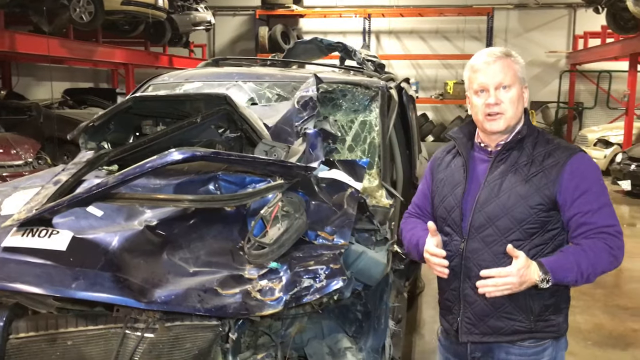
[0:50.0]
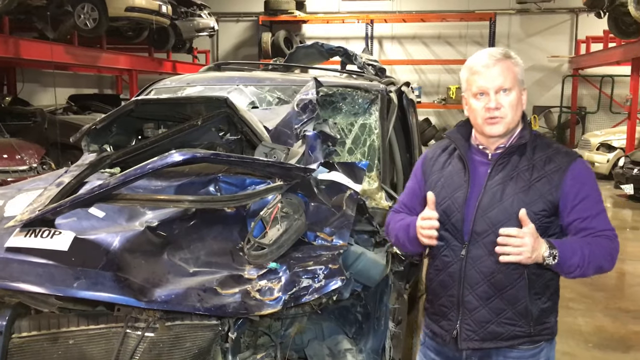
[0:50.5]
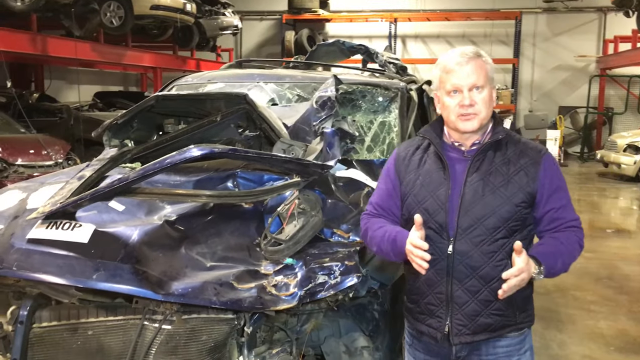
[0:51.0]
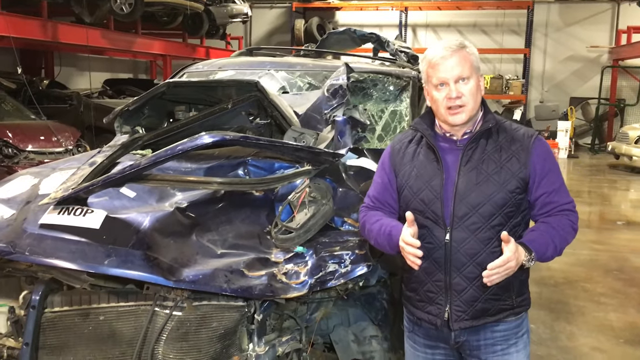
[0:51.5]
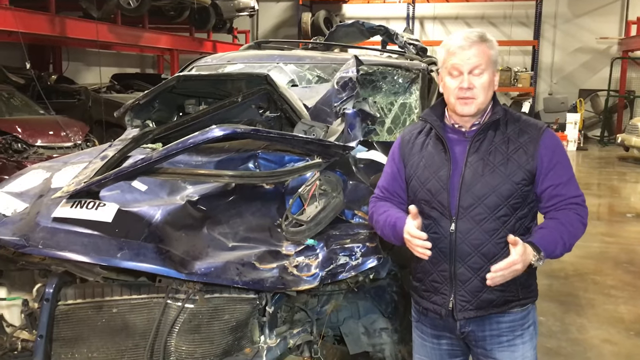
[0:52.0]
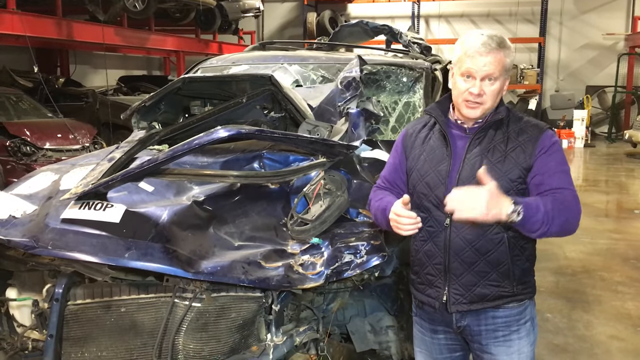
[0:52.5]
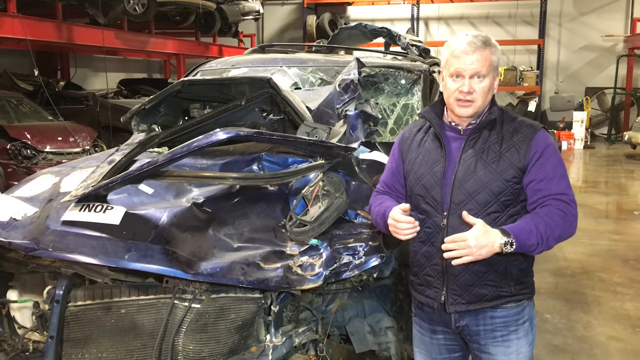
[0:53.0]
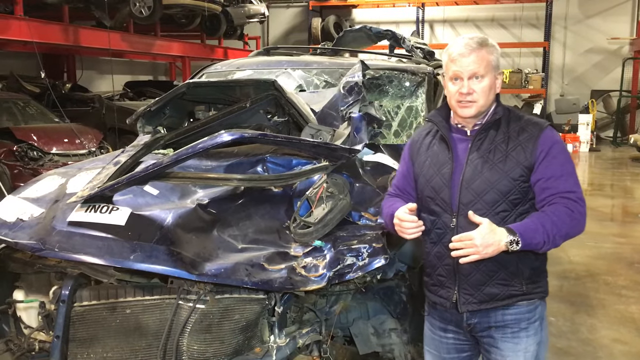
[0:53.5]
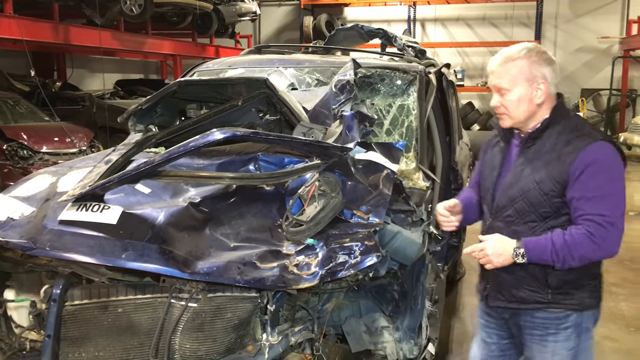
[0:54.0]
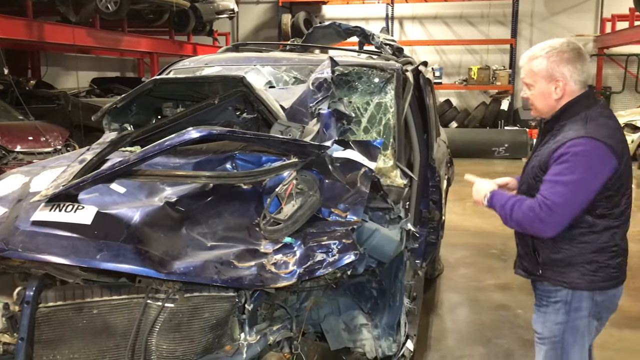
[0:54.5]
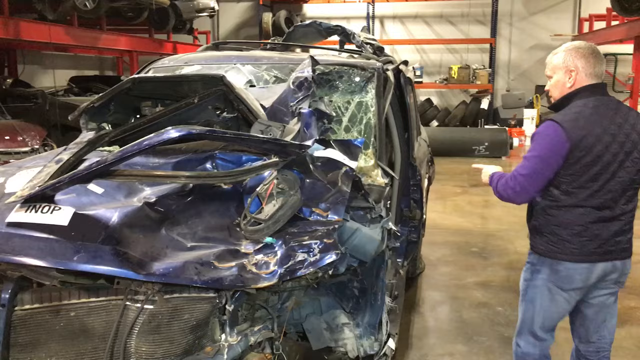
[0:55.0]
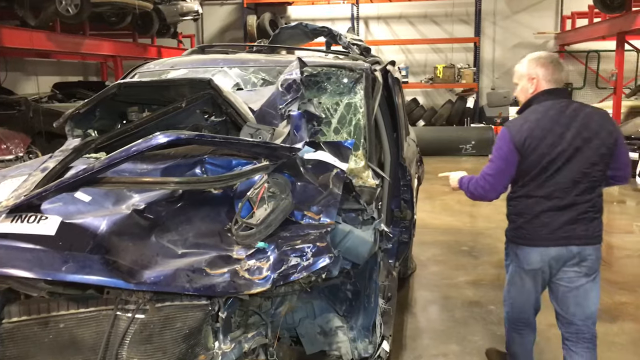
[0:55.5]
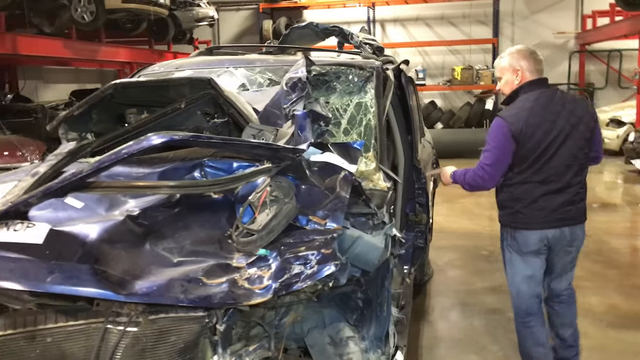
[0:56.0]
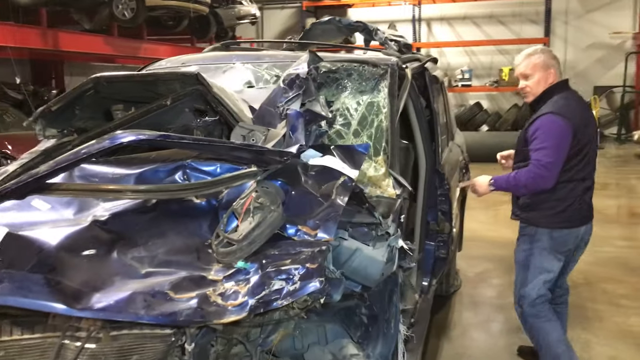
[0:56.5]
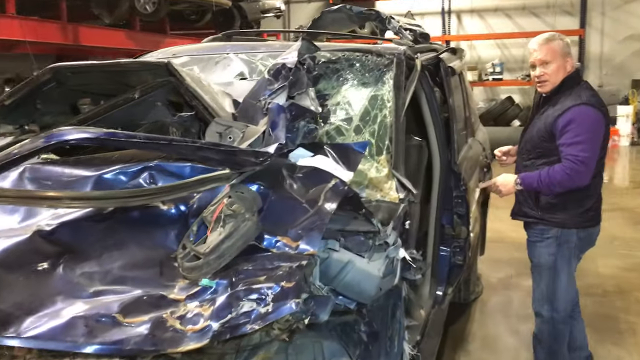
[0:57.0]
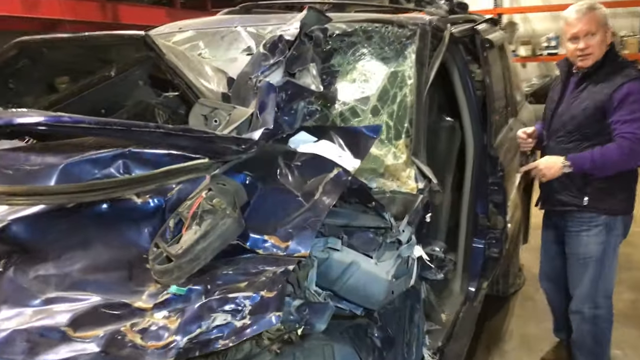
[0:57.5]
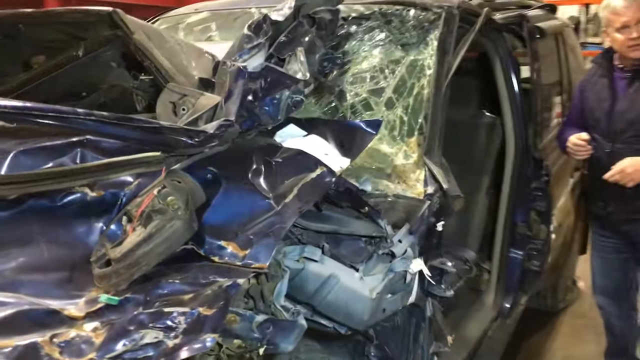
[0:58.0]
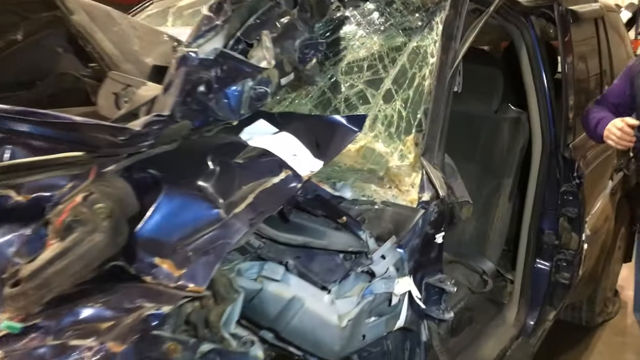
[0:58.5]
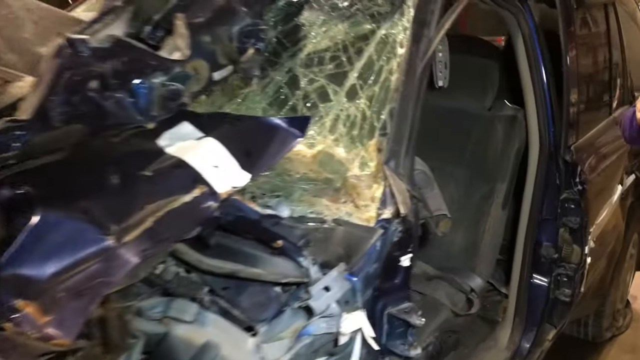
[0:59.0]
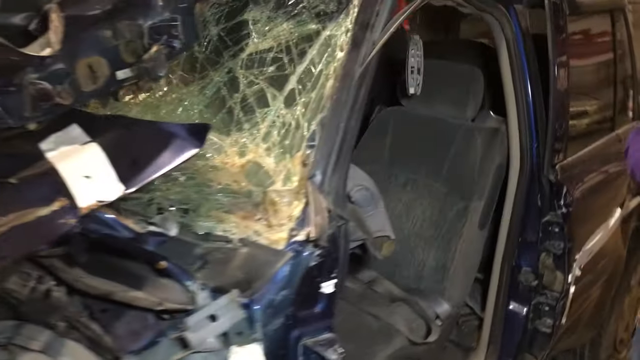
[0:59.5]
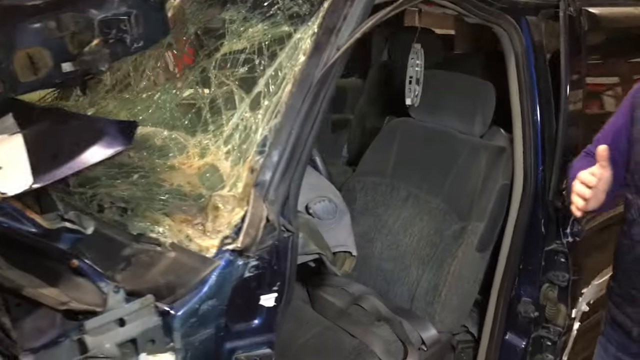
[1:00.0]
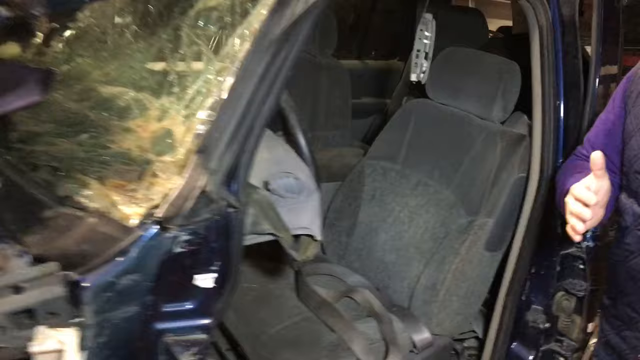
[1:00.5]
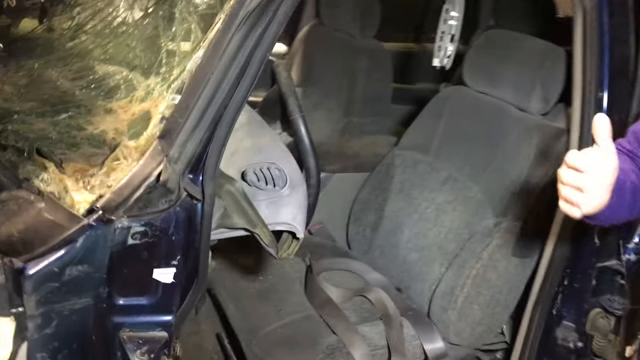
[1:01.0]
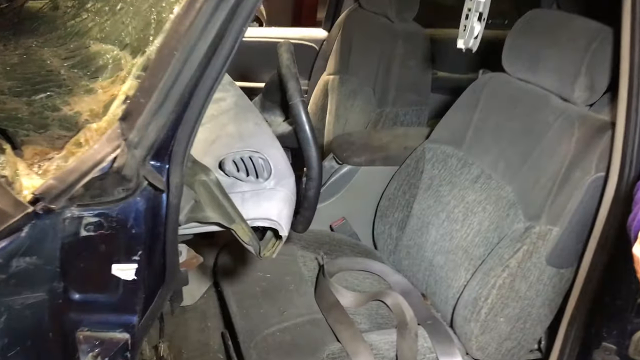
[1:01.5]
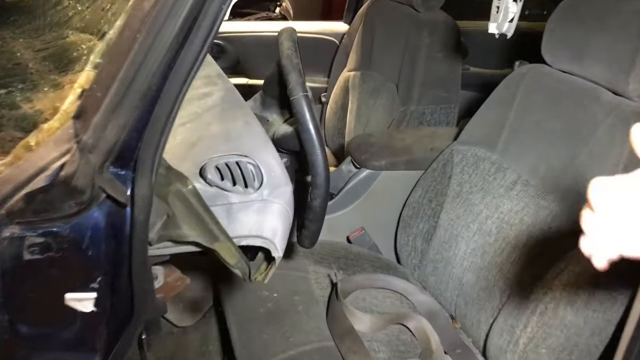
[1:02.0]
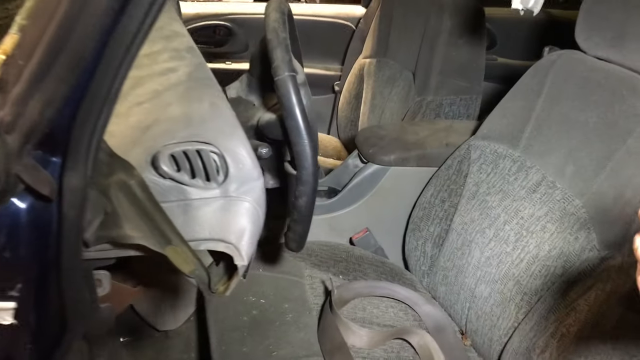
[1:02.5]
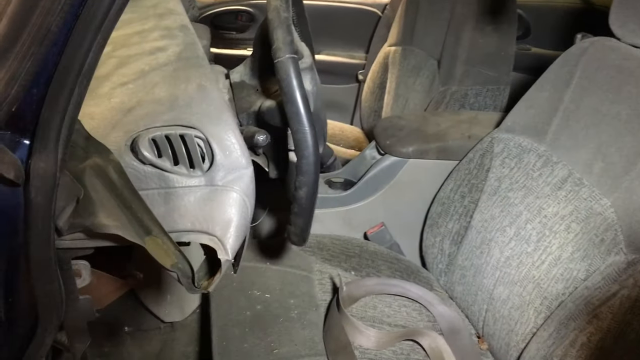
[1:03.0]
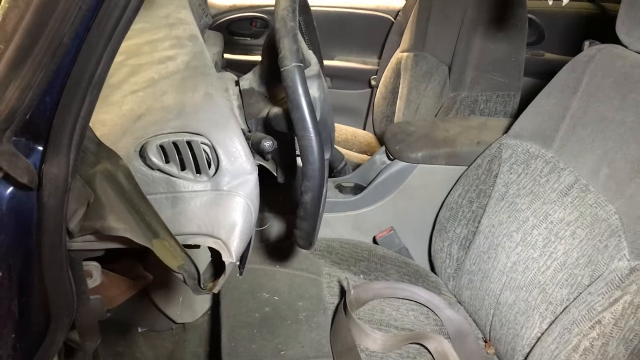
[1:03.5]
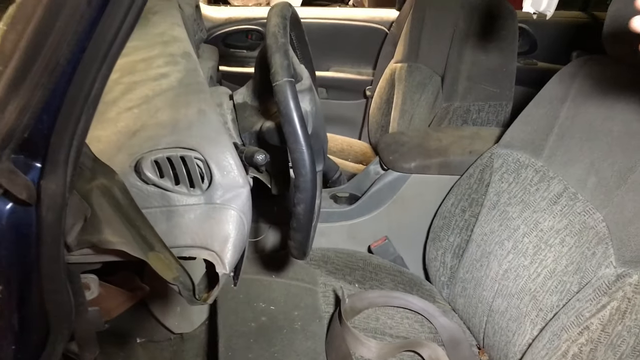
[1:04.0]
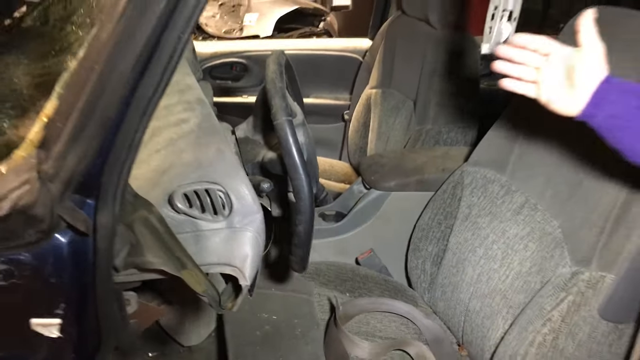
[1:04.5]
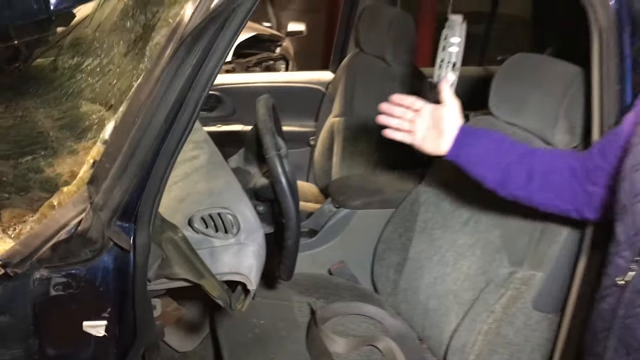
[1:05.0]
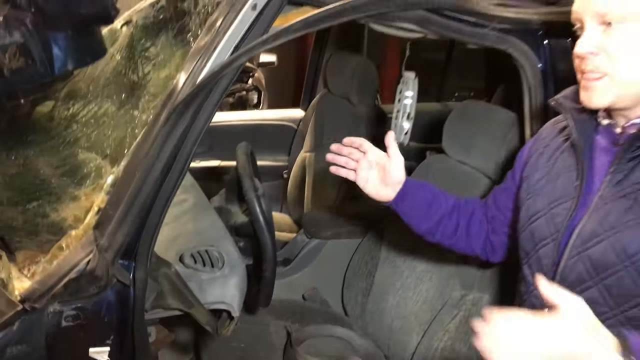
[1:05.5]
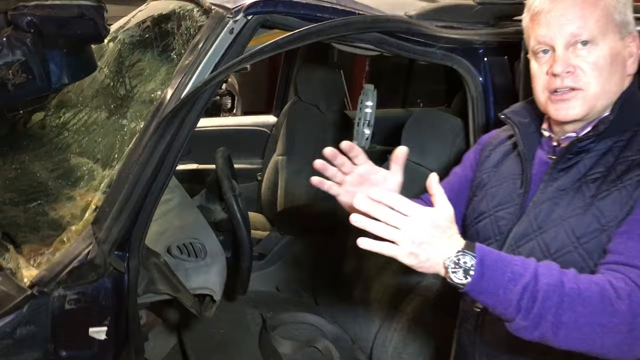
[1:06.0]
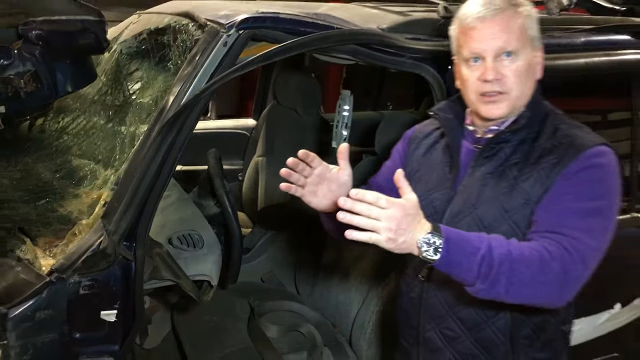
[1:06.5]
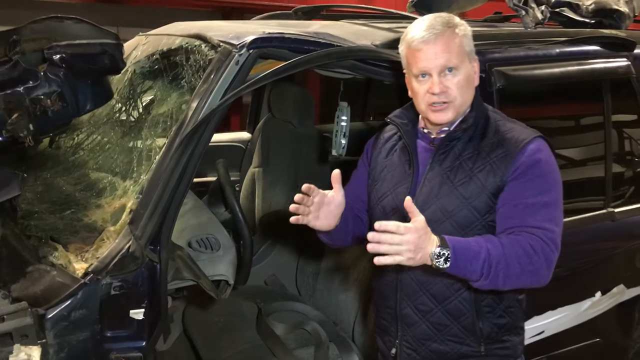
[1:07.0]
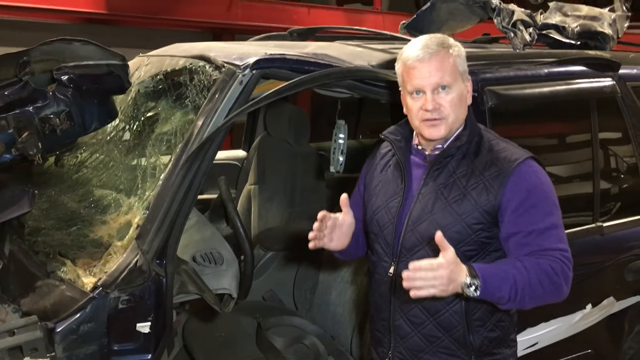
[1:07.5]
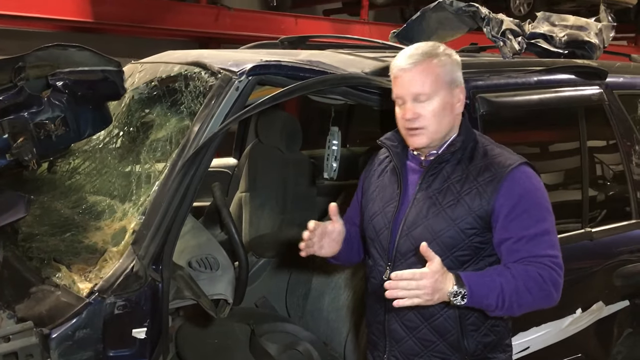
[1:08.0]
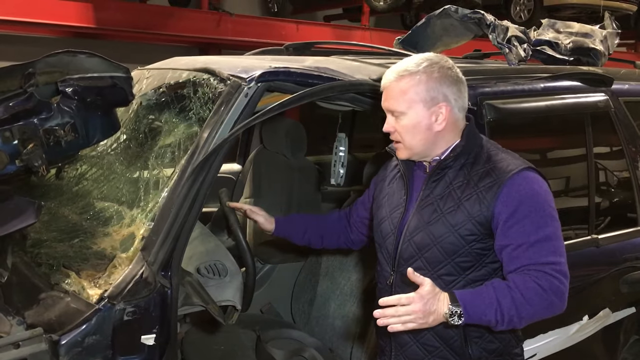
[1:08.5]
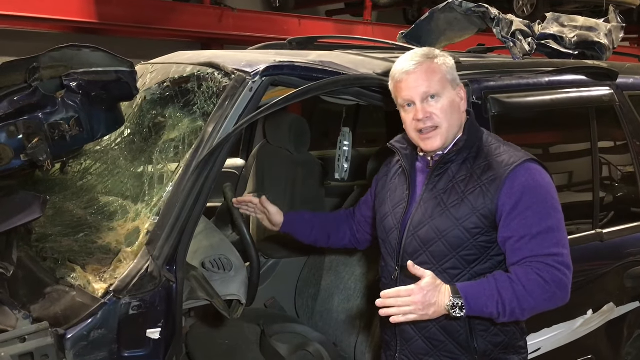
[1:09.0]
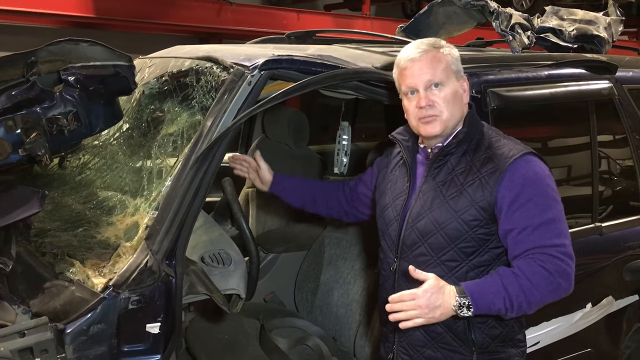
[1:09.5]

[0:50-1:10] The man starts in front of the vehicle on the driver's side, then walks back a bit until he stands parallel to the driver's side. There is no door; it has apparently been removed, so the inside of the vehicle is visible, with a gray cloth-type bucket seat interior. He points with his left hand as the camera comes around to show the inside. The steering wheel looks like it sustained a bit of a blow. After showing the inside of the vehicle, he gestures inside and holds his two hands apart, showing a distance of perhaps about a foot.